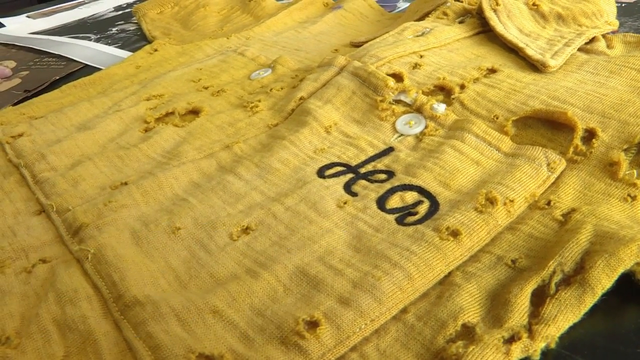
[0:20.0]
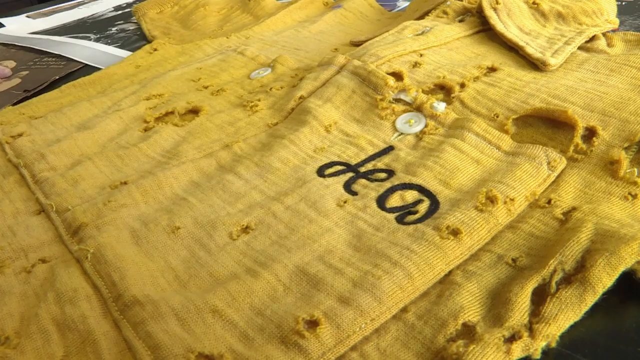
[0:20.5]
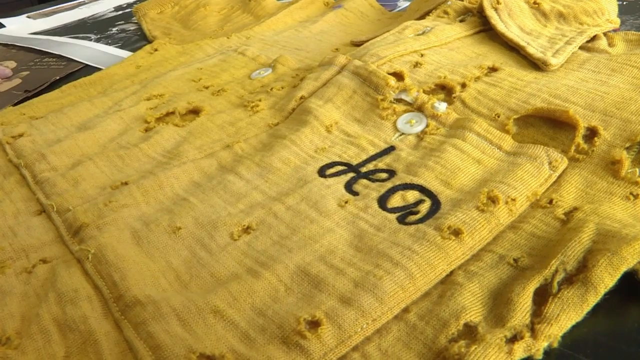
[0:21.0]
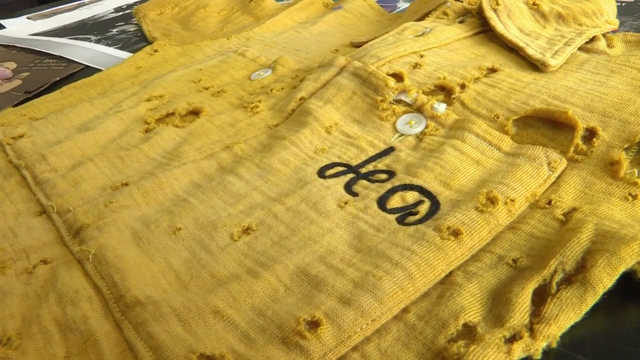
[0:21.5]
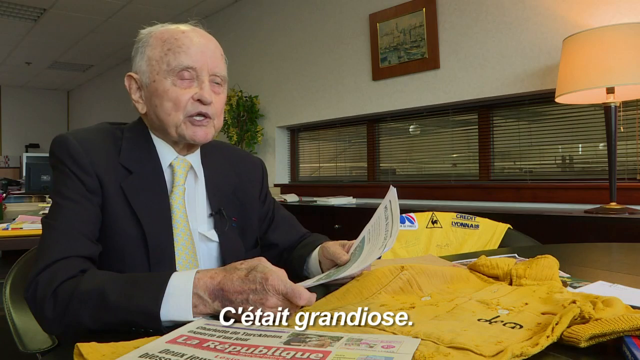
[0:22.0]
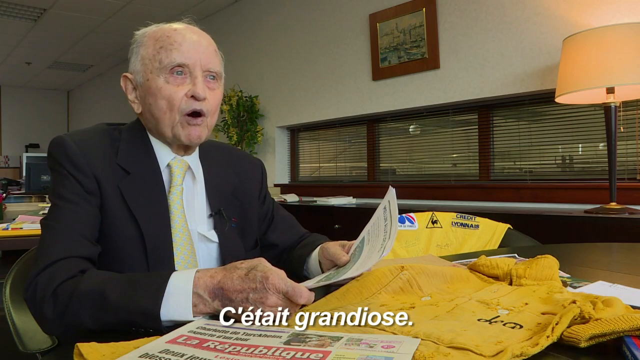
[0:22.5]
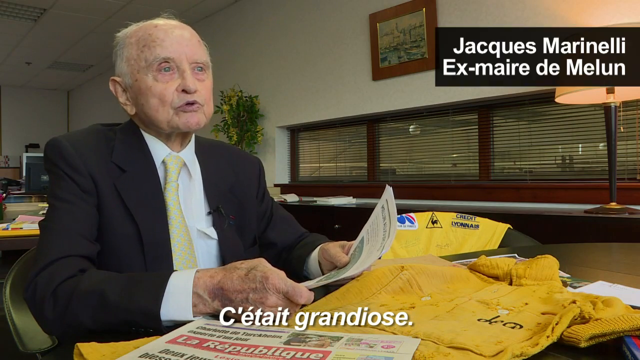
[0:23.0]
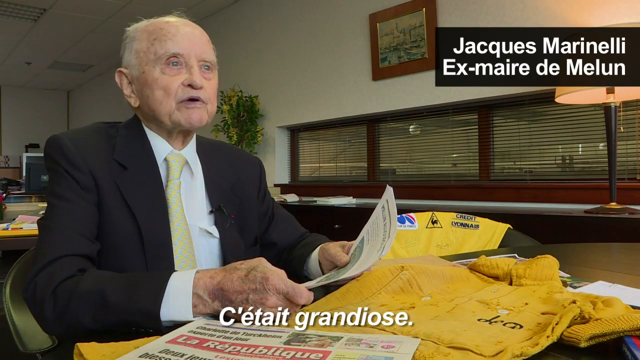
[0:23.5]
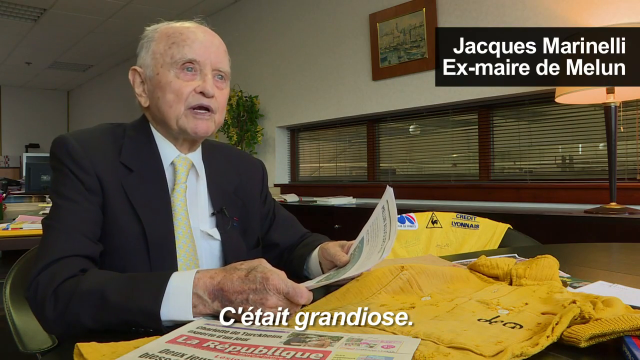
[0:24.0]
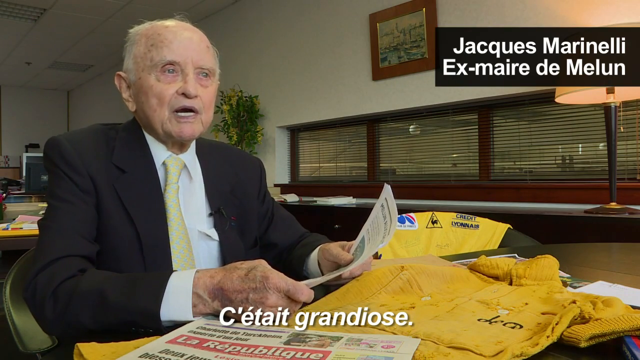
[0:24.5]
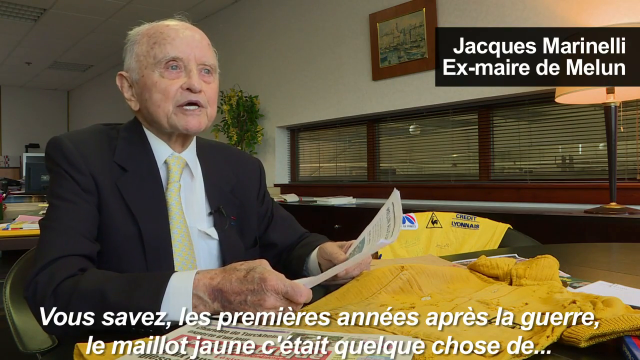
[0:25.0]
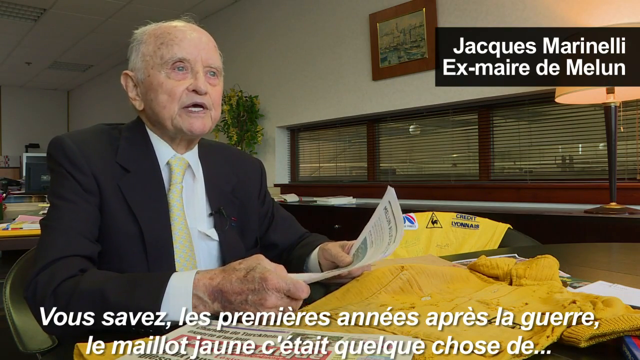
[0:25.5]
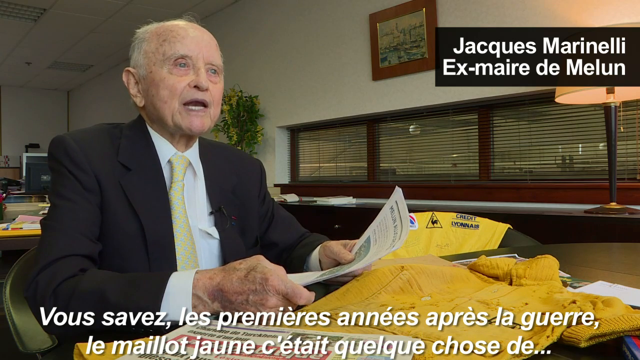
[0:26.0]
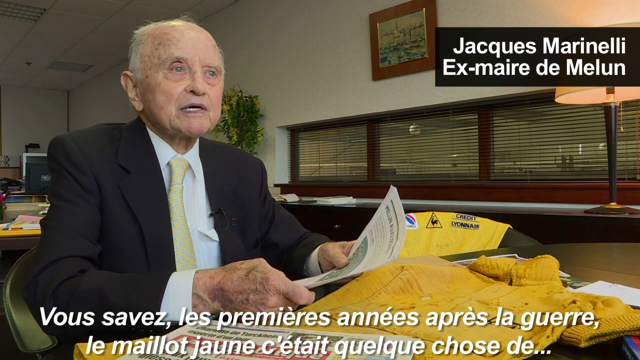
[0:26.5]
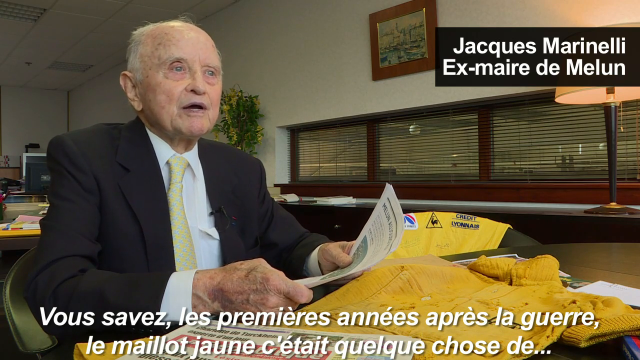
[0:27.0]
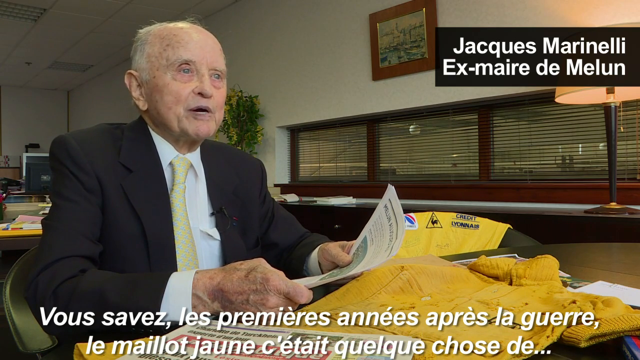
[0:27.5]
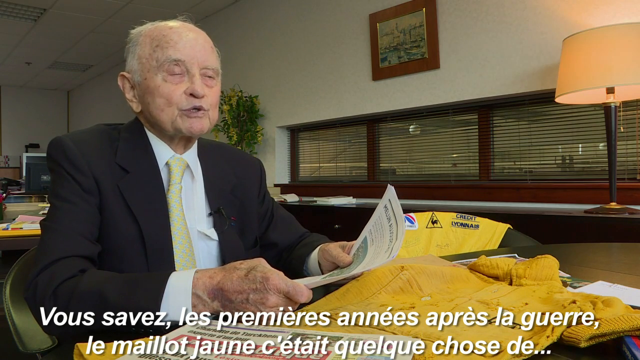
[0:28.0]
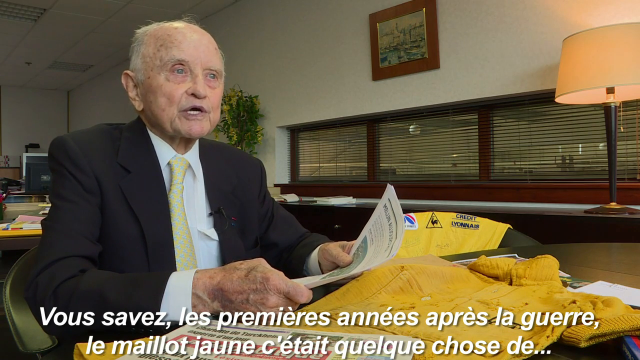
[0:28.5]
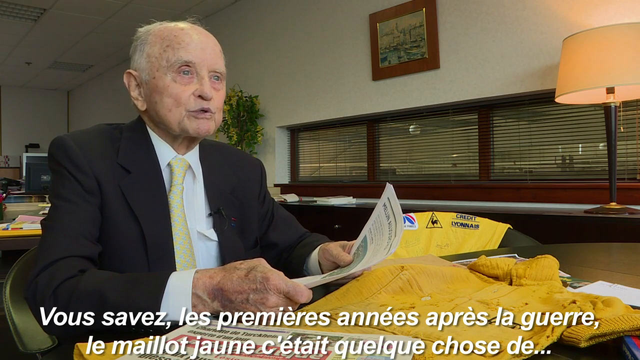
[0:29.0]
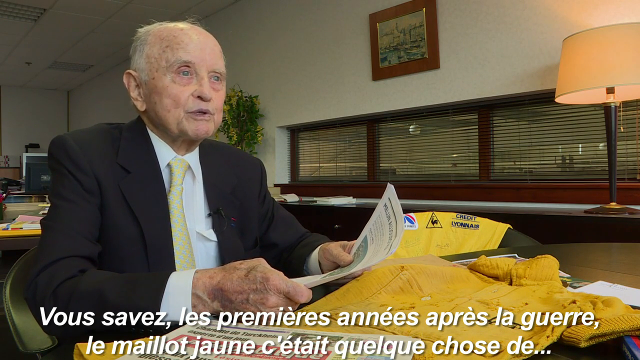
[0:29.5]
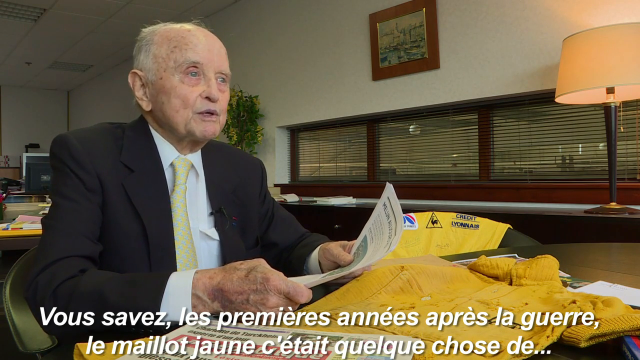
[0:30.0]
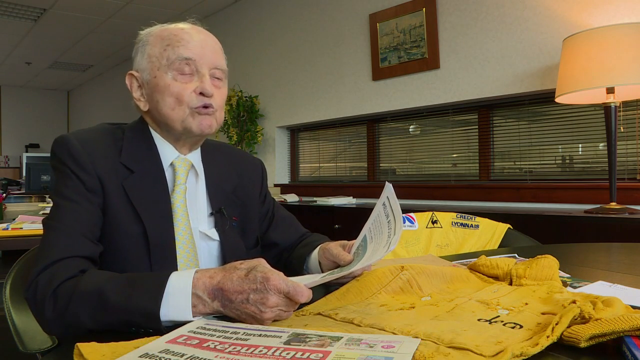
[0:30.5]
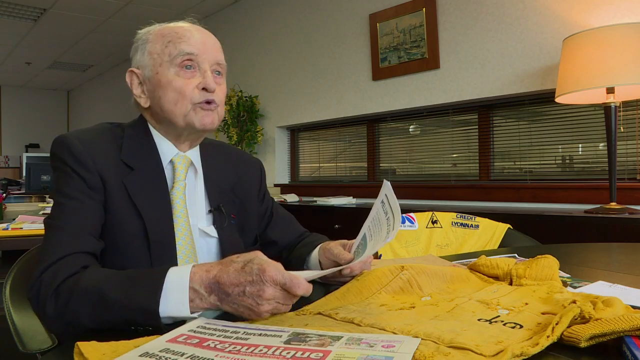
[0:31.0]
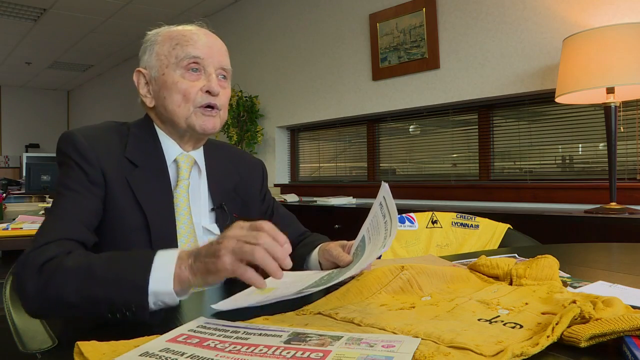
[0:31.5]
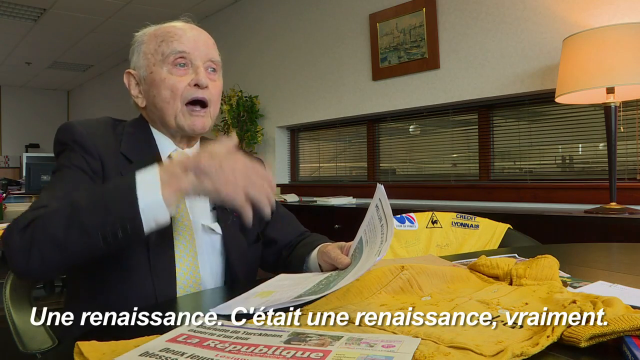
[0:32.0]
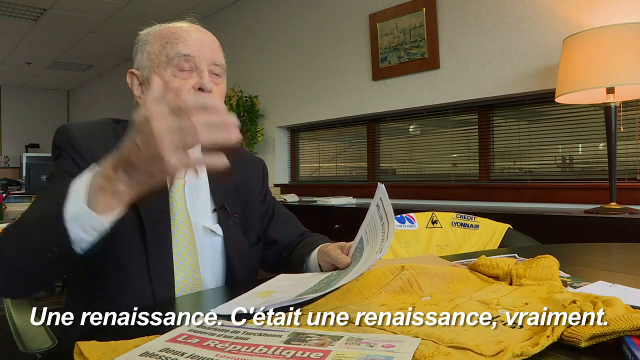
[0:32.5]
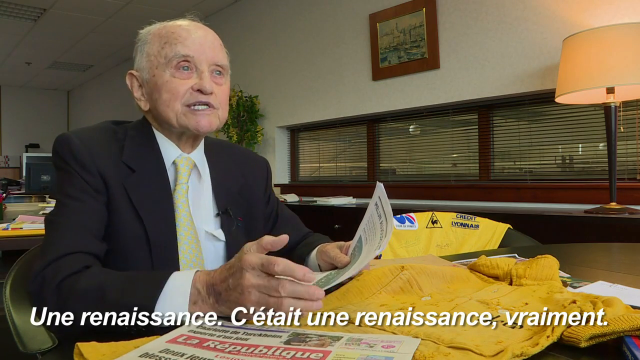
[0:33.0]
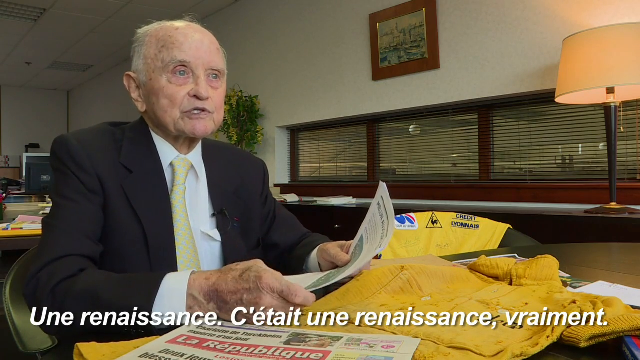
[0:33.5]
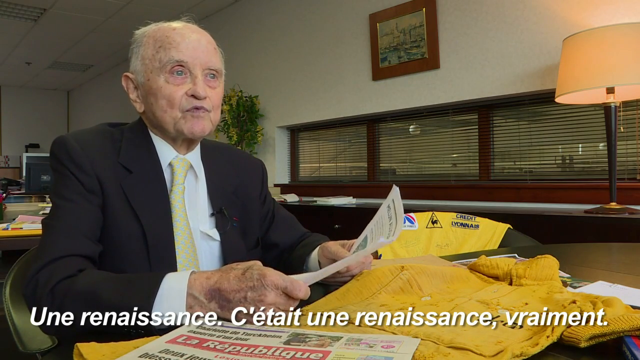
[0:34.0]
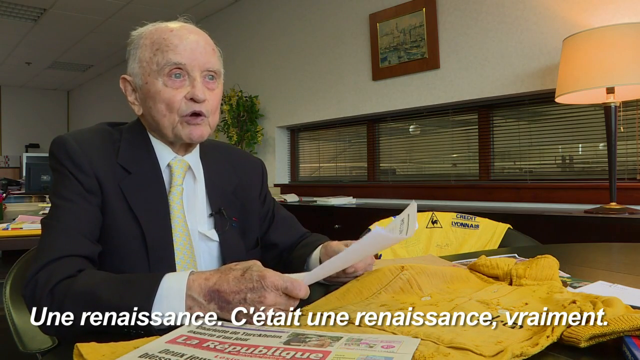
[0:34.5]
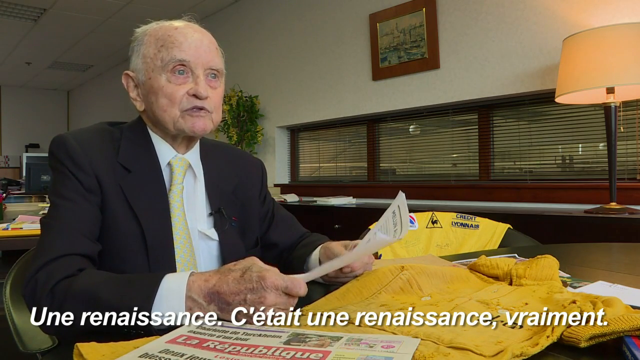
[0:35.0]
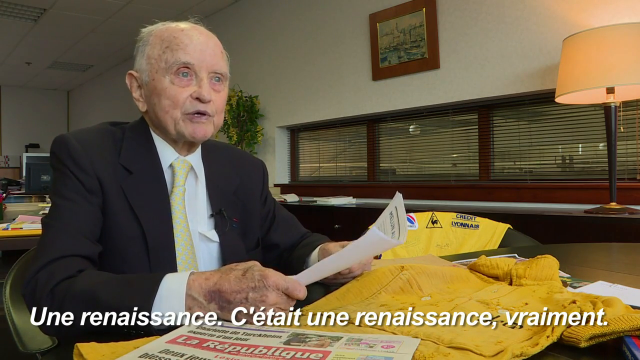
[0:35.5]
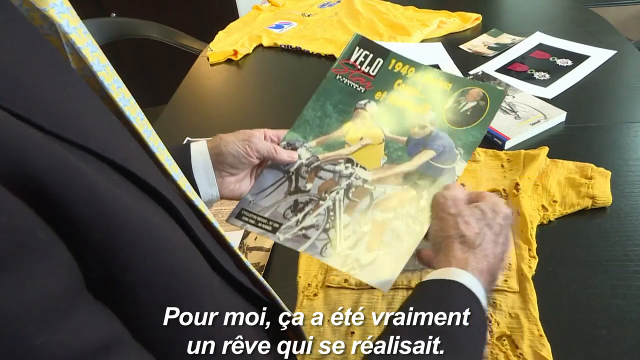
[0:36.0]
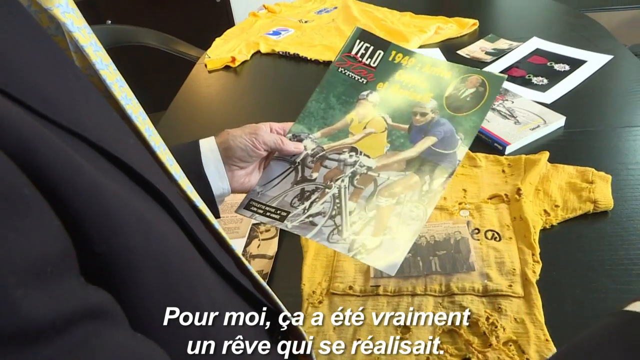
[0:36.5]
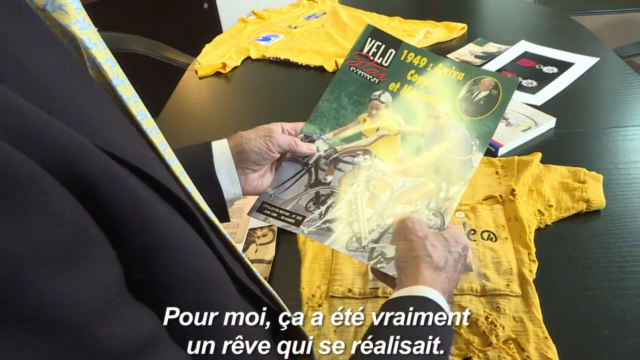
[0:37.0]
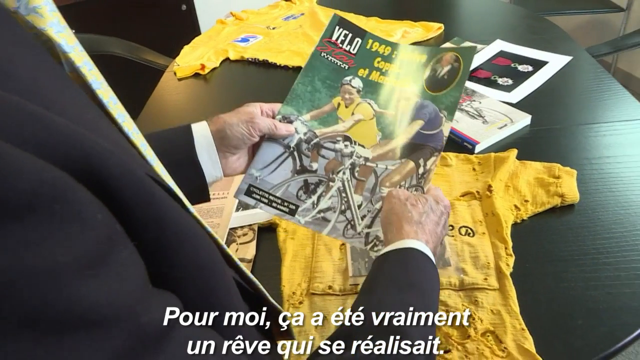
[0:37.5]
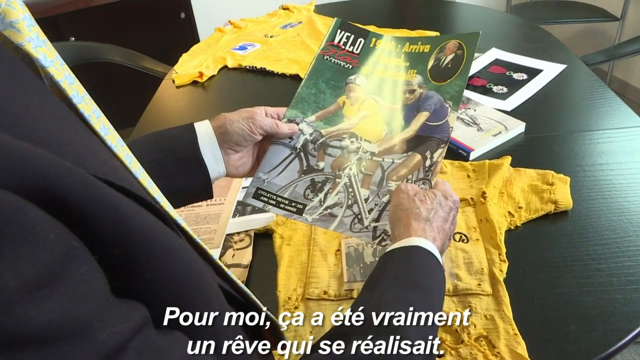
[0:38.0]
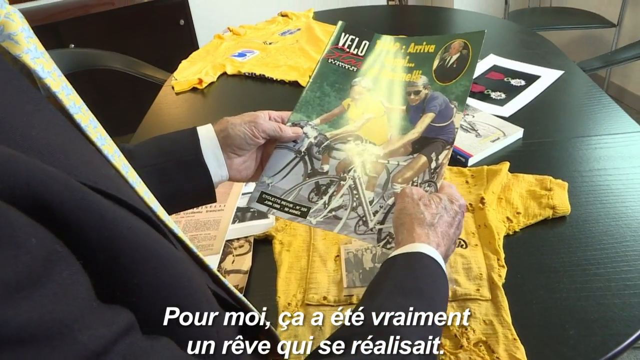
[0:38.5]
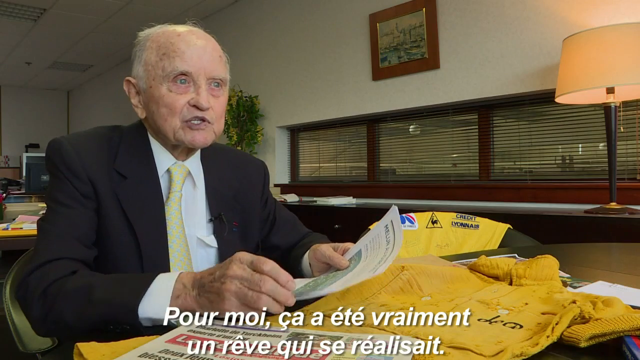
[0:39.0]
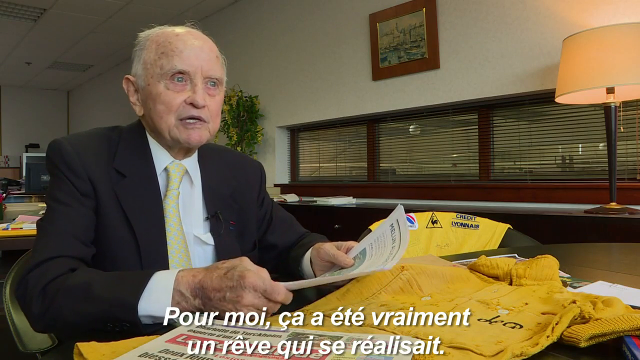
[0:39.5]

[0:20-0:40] A close-up shows the shirt, its neckline toward the top right corner and the body angled down to the left. It has pockets on both sides; the one on the right side has black lettering that almost looks like "Leo", though it might be in a foreign language. White buttons are pushed through the holes. The shirt is badly tattered and torn throughout, especially around the right pocket. The video cuts to the man sitting in a chair at the table with the shirts in front of him. To his right, one shirt lies over the back of a chair, and this one is in really good shape. Above that, down the right side wall, are windows with blinds, and above that a white wall with a picture on it. A plant is in the background over his right shoulder, and a desk is behind him in the far background. He wears a black coat, a white shirt and a kind of tannish cream-colored tie. Looking forward to the left, he is identified by on-screen text as "Jacquez Marinelli", with more foreign-language text across the bottom. He holds a paper in his hands, looking off to the right as he talks, then takes his right hand off the paper, kind of waves it in the air, and goes back to holding the paper. The video cuts to an over-the-shoulder shot down at the table, where there is some sort of magazine with a lot of glare that looks like a bicycling magazine. Bicycles are visible; the person on the left wears the yellow shirt, and the man on the right, in a blue shirt, reaches out to touch the shoulder of the person in yellow.